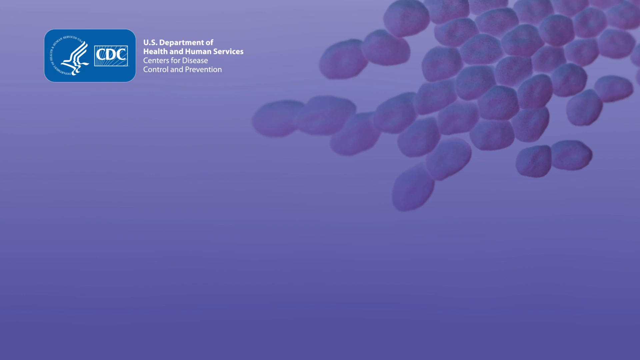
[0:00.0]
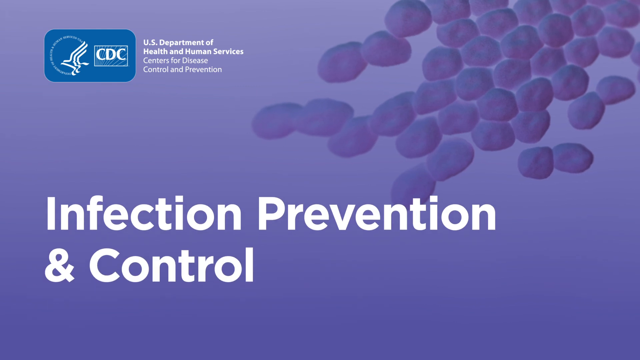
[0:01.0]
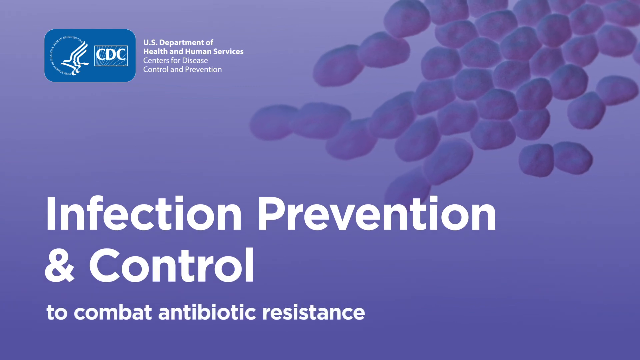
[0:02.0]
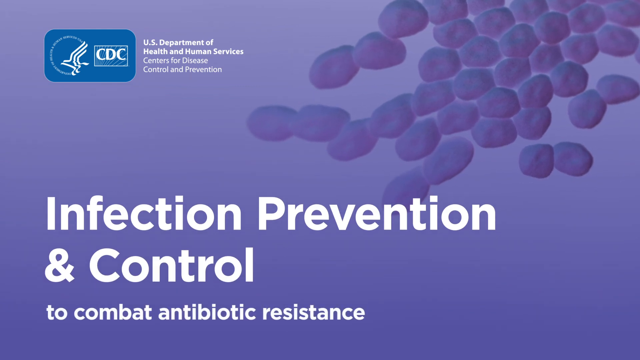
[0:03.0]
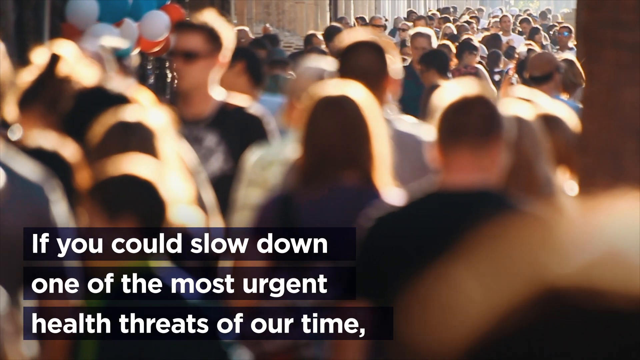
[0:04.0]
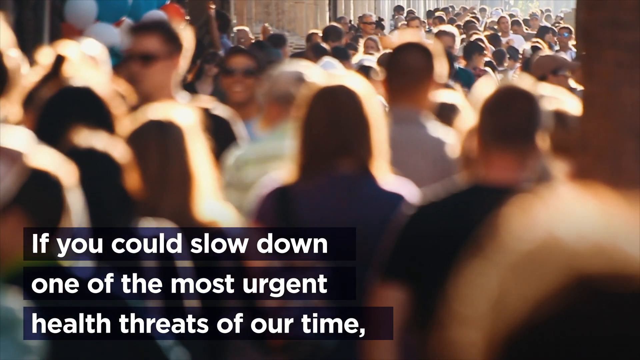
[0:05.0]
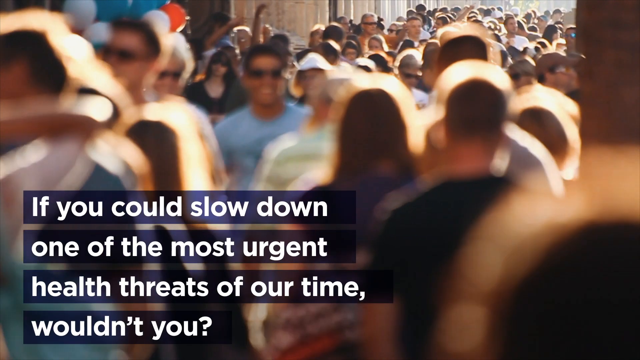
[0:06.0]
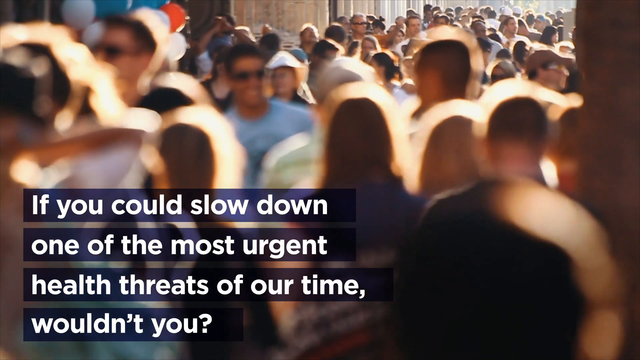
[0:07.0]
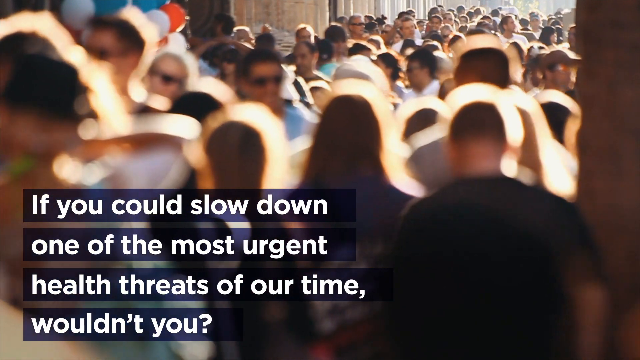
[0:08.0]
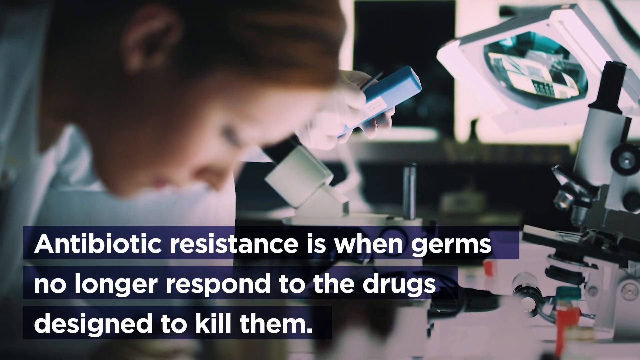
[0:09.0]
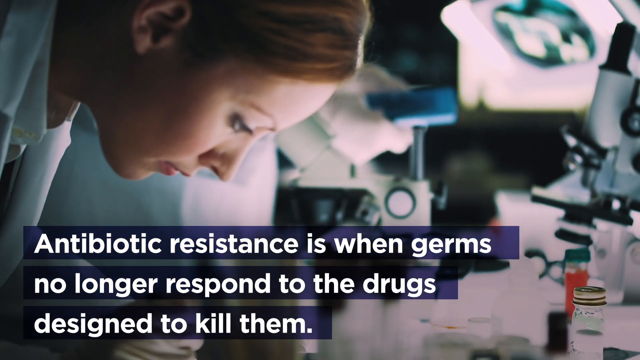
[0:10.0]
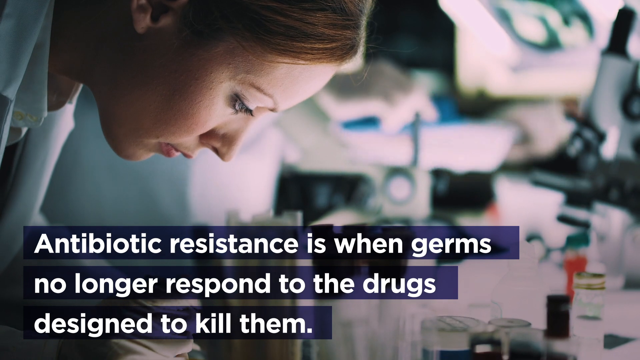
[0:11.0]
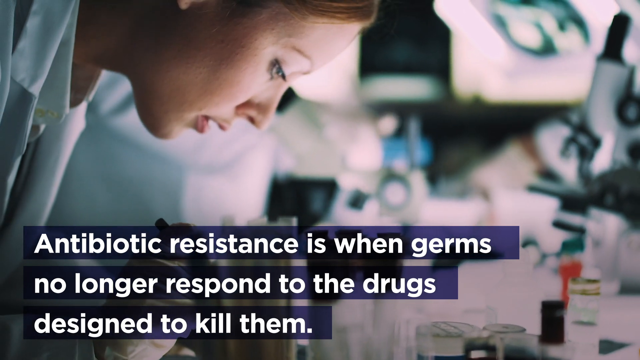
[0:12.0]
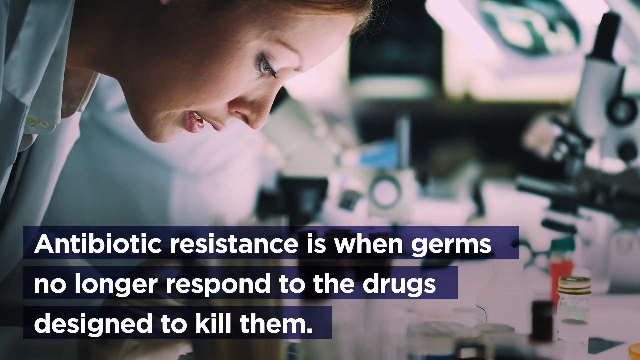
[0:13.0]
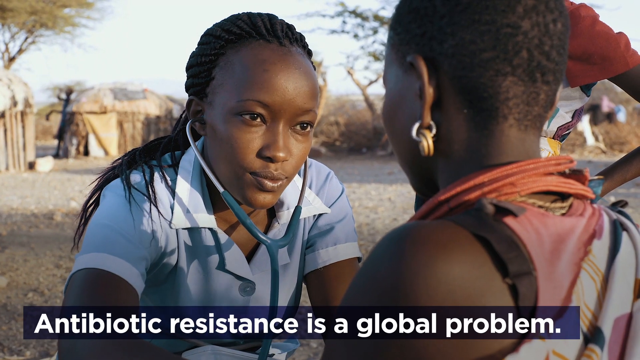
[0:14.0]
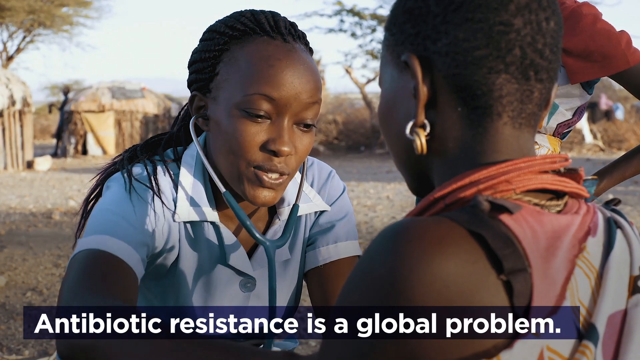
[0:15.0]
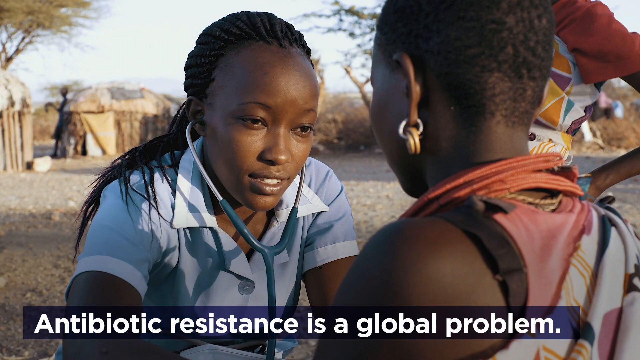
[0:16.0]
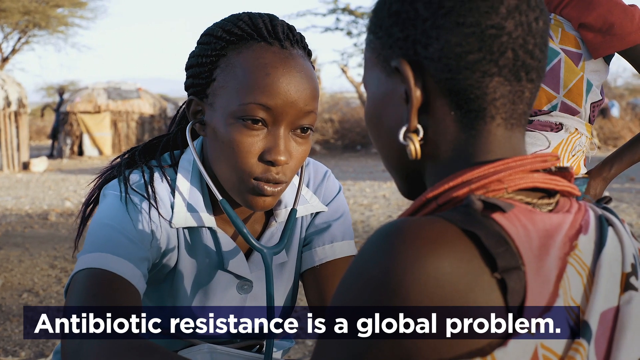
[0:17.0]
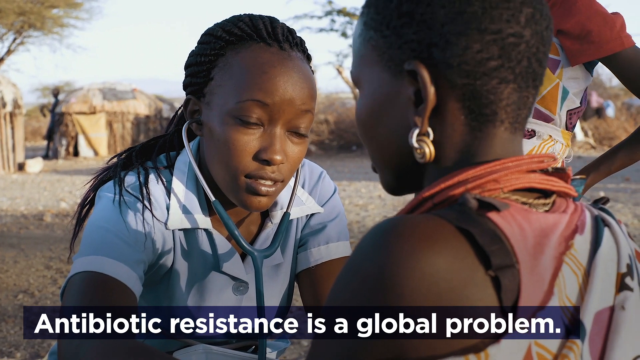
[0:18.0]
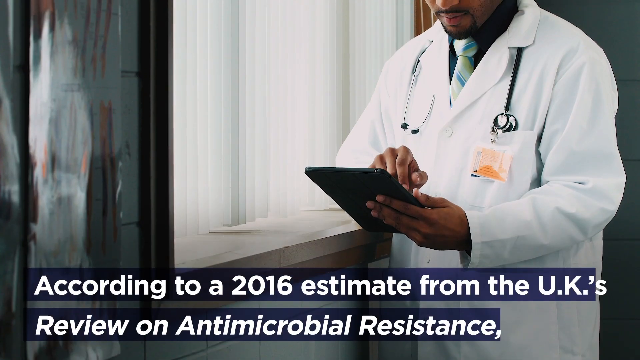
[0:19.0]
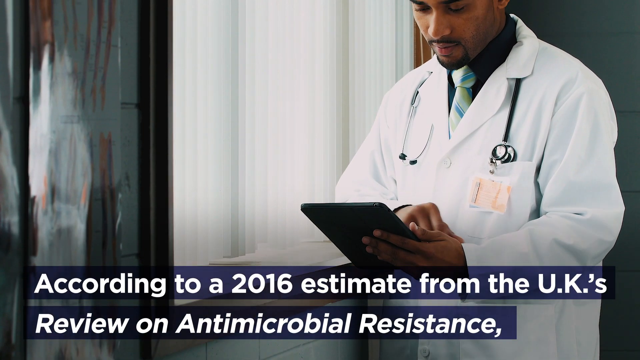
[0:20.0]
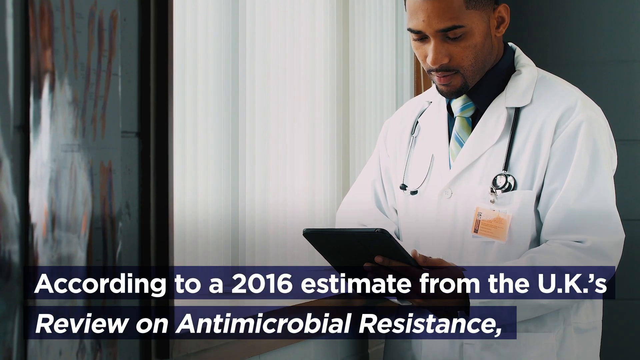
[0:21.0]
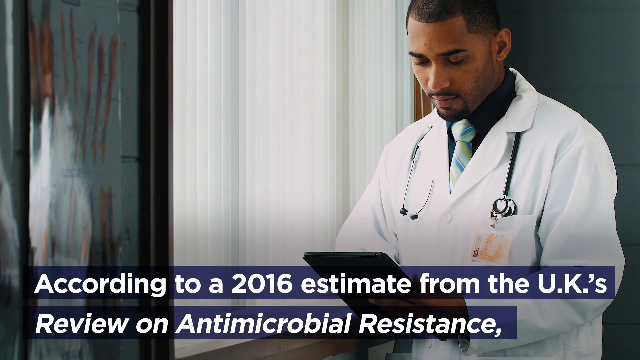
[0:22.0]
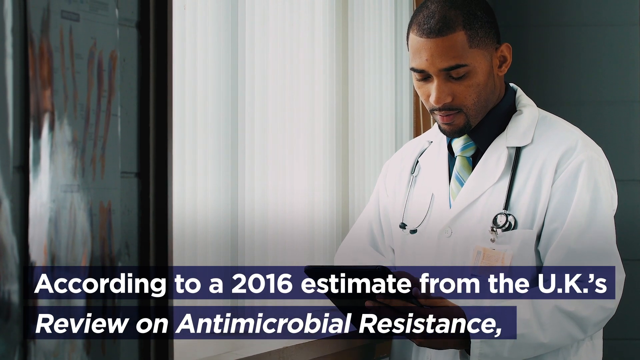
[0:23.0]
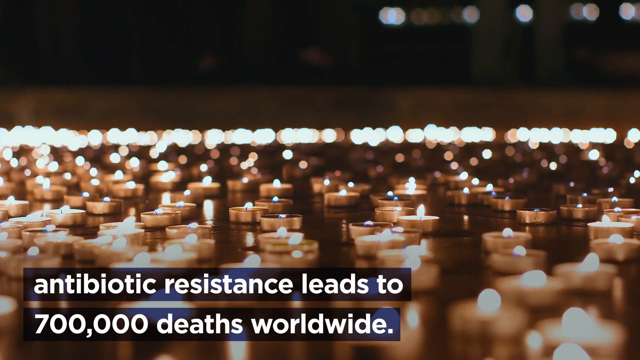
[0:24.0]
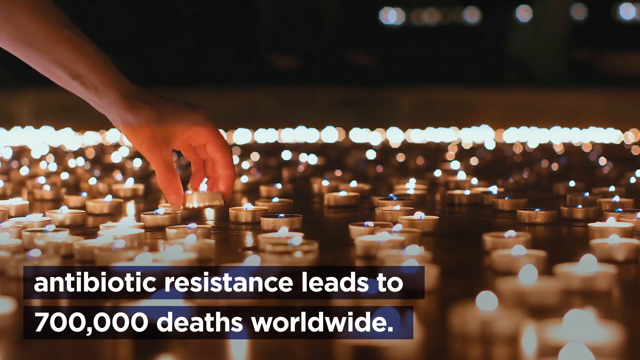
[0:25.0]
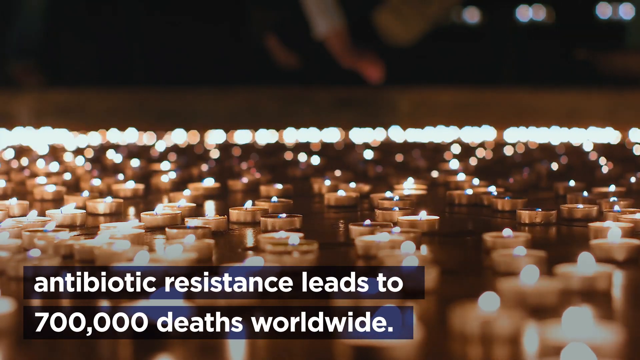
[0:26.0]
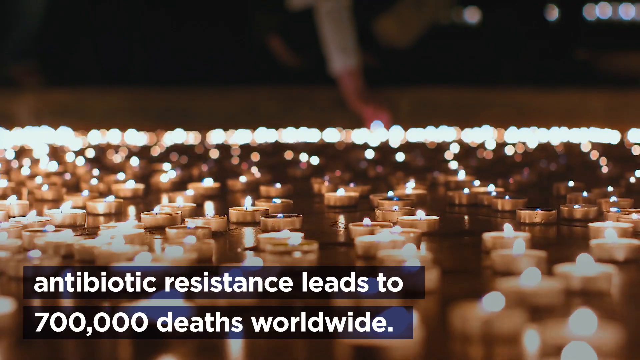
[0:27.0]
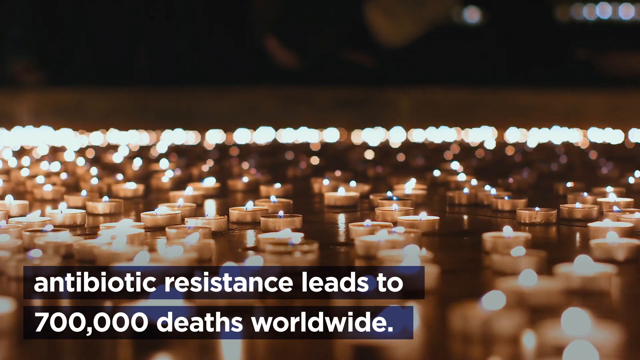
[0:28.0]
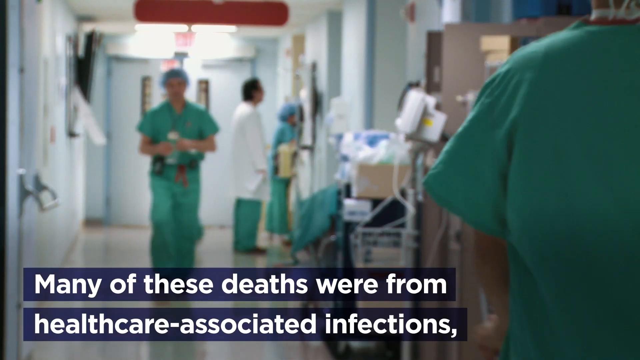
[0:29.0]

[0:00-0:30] A blue rectangle in the top left reads "CDC," with "U.S. Department of Health and Human Services" beside it, and white letters at the bottom of the screen read "infectious prevention and control." Little germs float at the top of the screen. The scene moves to a crowd of people walking down a busy sidewalk that is completely full of people. Text reads "antibiotic resistance is when germs no longer respond to drugs," while a scientist or druggist is bent over a microscope, looking at the antibiotic-resistant germs. Next comes a place that looks like Africa, where an African lady has a doctor or nurse squatting in front of her, trying to help her. Then a white doctor in a white doctor's coat stands in front of a window, writing on a clipboard.